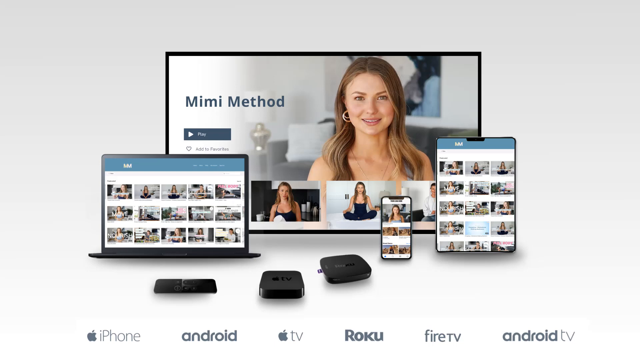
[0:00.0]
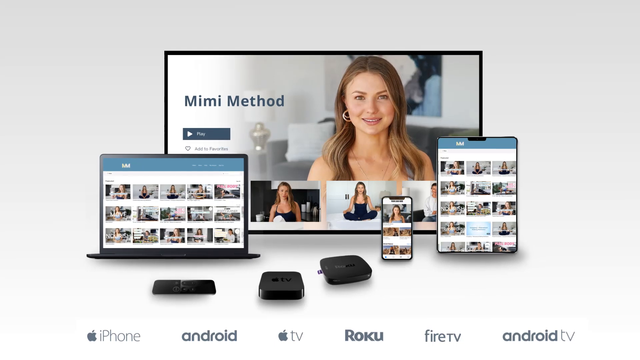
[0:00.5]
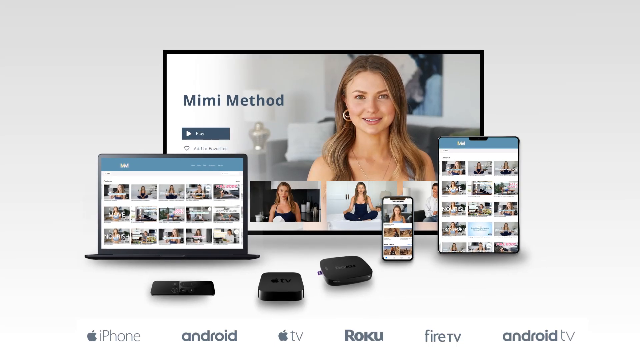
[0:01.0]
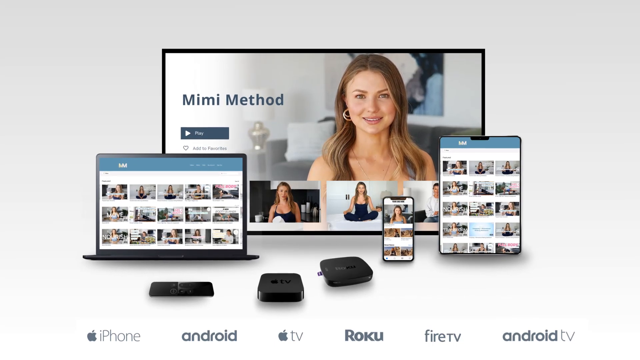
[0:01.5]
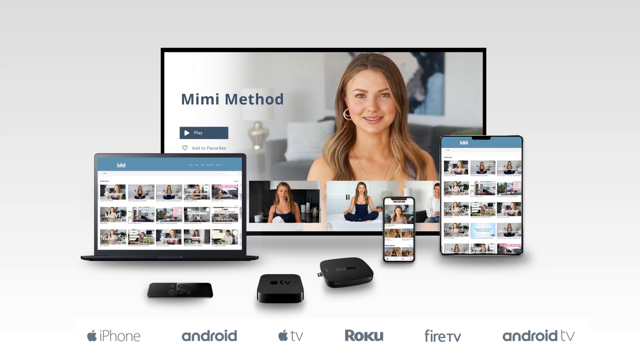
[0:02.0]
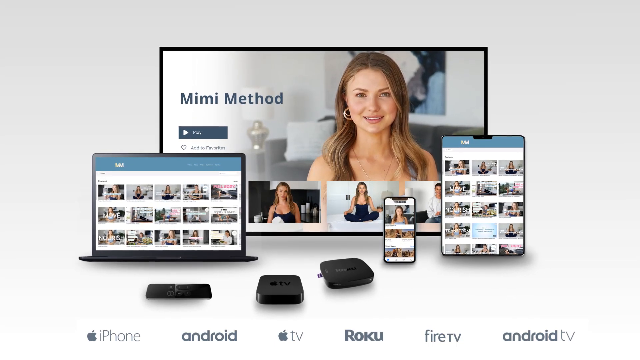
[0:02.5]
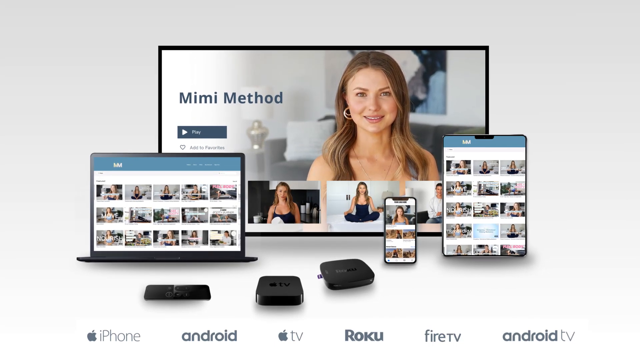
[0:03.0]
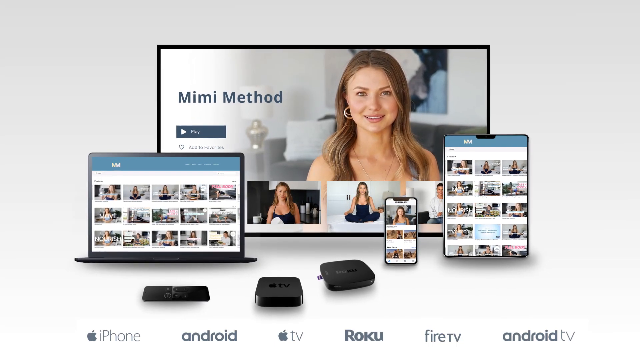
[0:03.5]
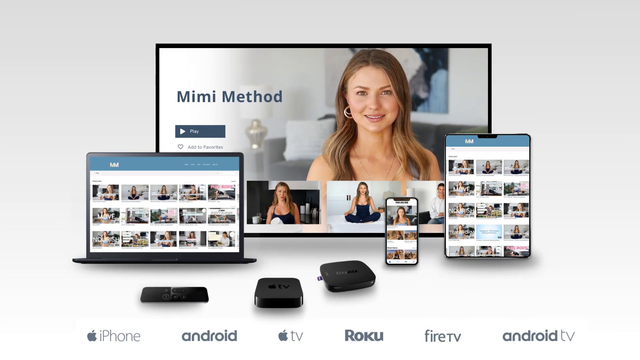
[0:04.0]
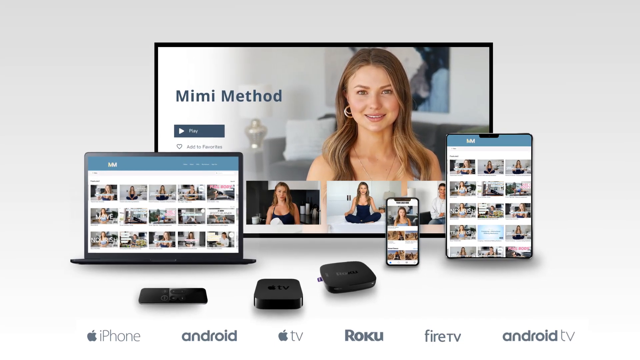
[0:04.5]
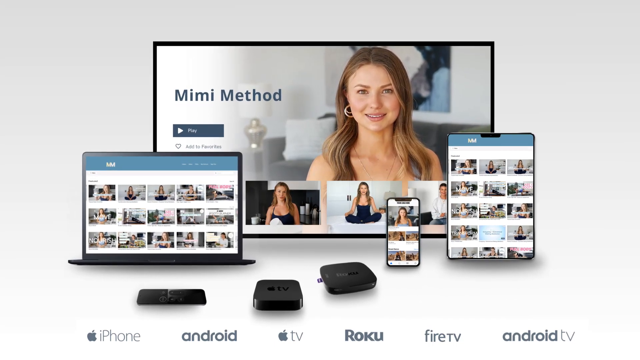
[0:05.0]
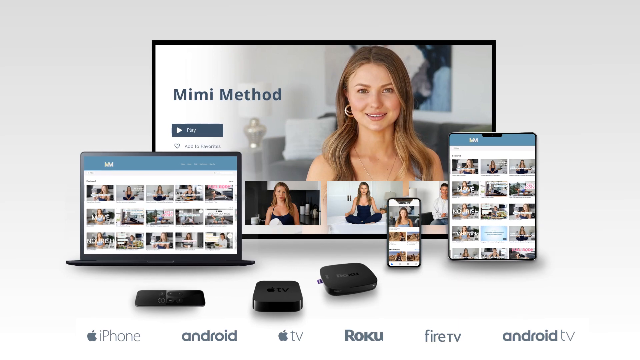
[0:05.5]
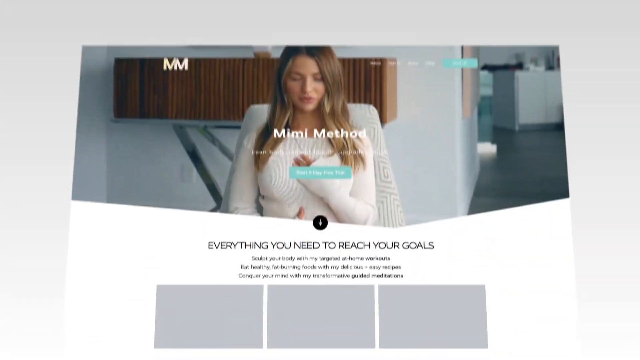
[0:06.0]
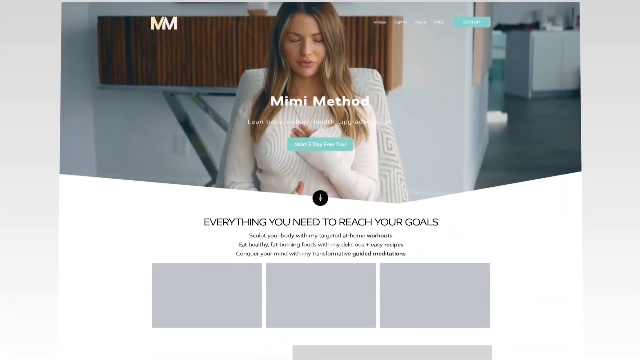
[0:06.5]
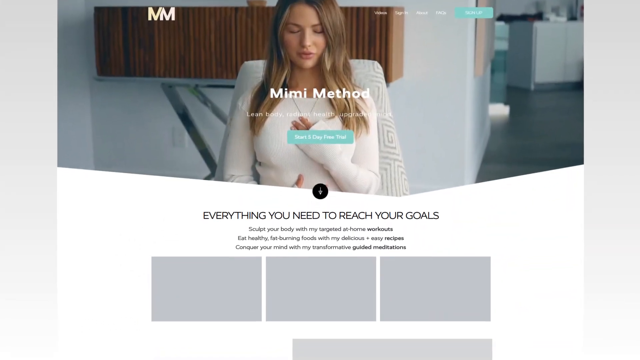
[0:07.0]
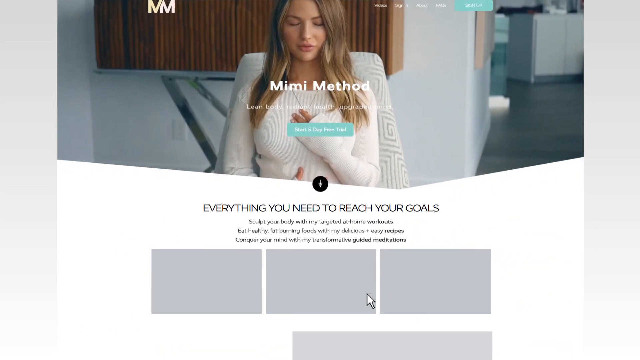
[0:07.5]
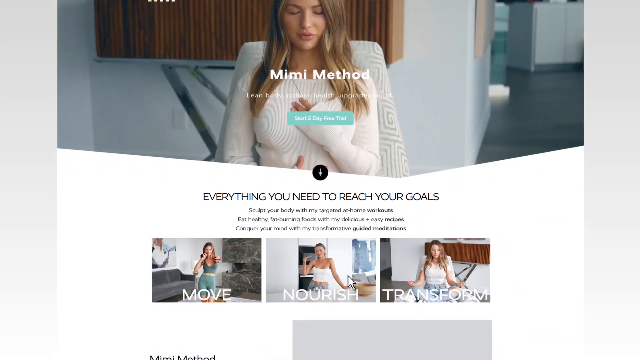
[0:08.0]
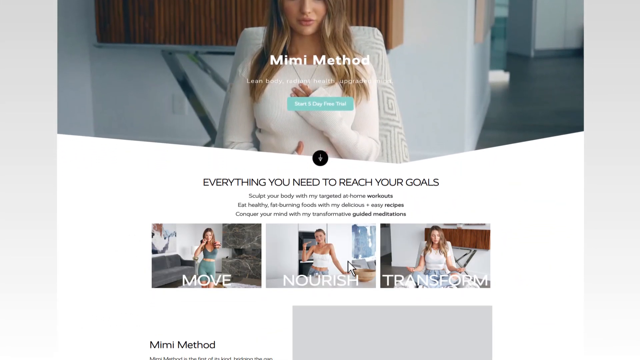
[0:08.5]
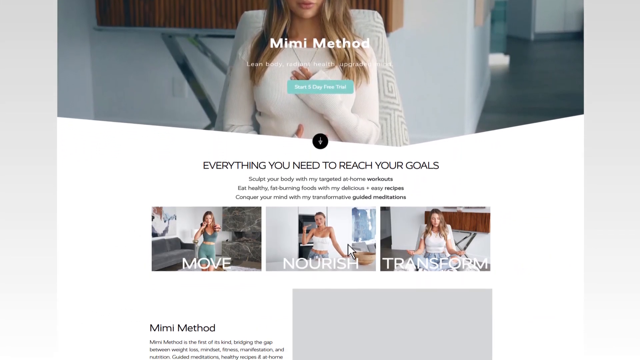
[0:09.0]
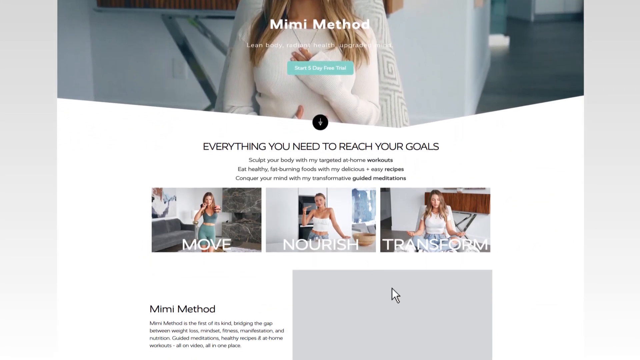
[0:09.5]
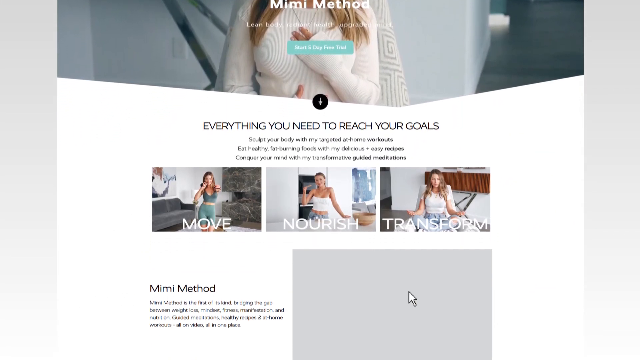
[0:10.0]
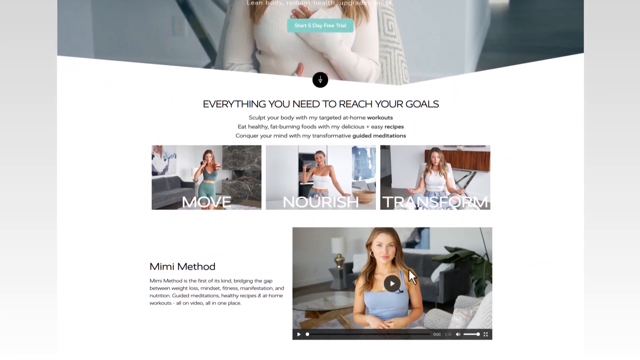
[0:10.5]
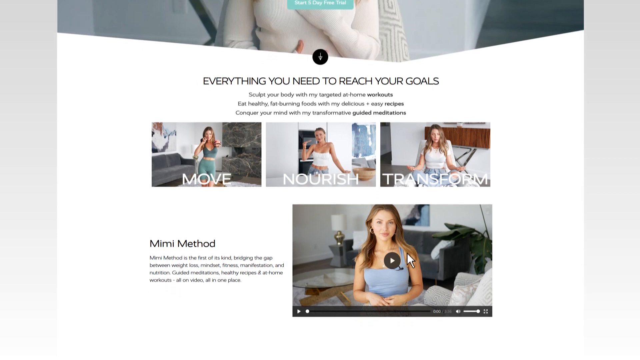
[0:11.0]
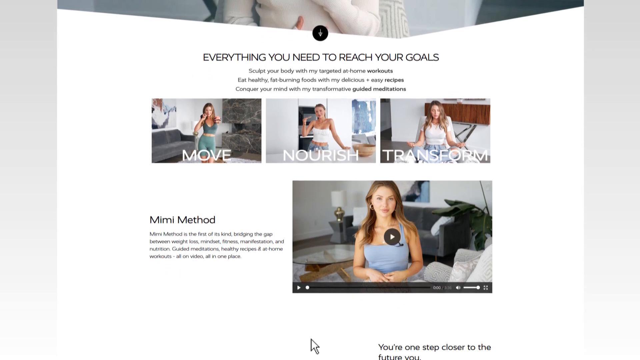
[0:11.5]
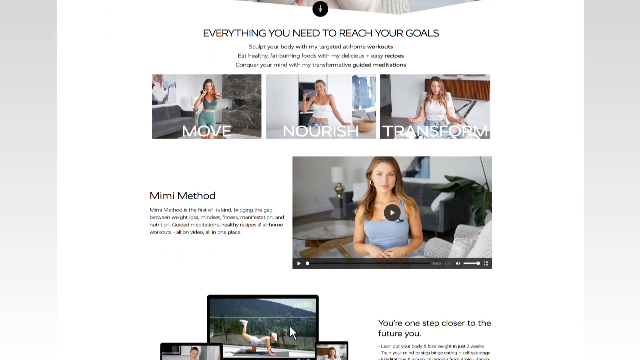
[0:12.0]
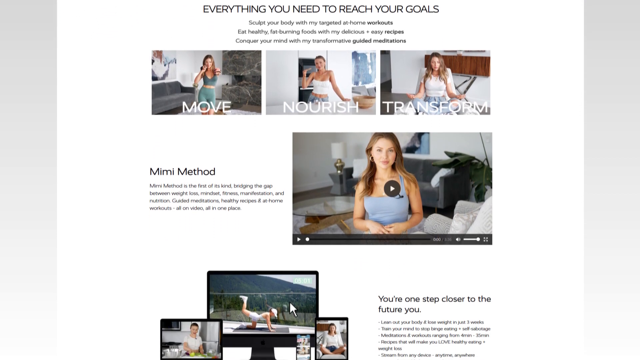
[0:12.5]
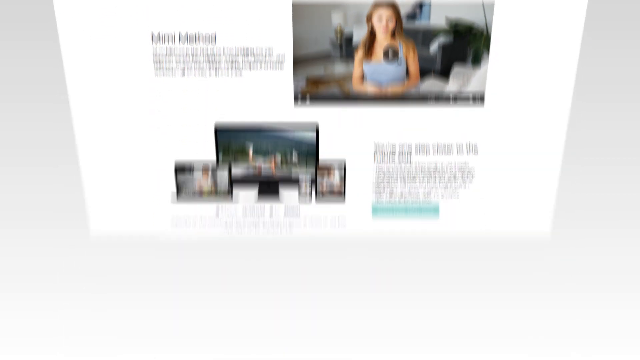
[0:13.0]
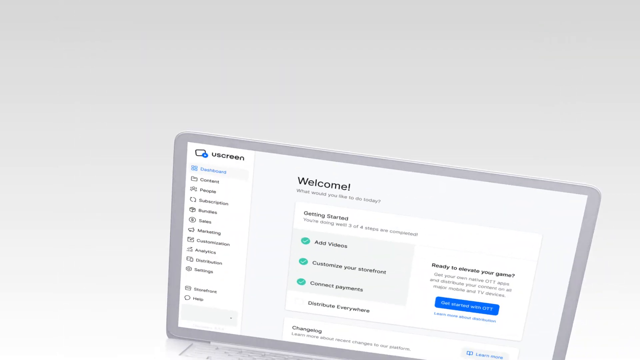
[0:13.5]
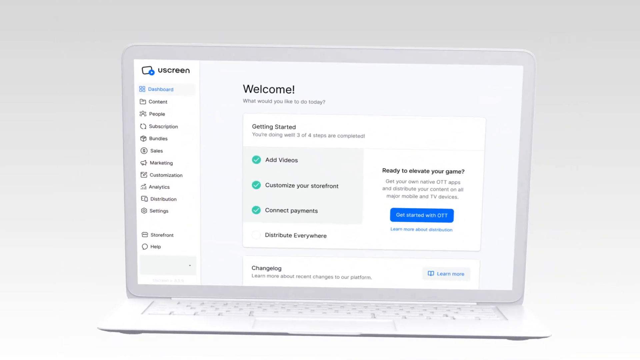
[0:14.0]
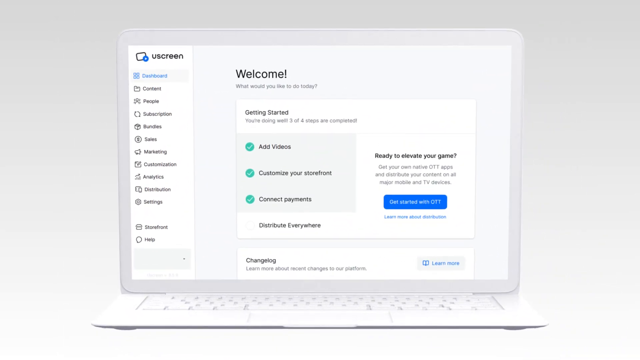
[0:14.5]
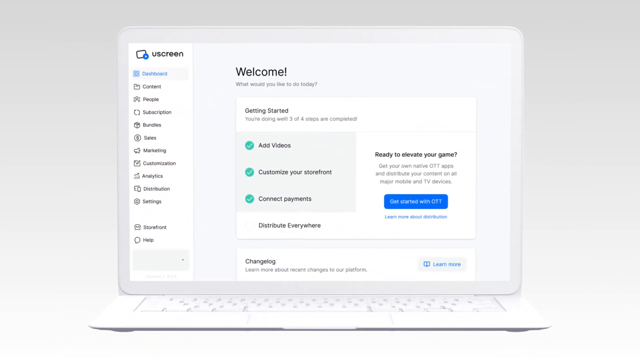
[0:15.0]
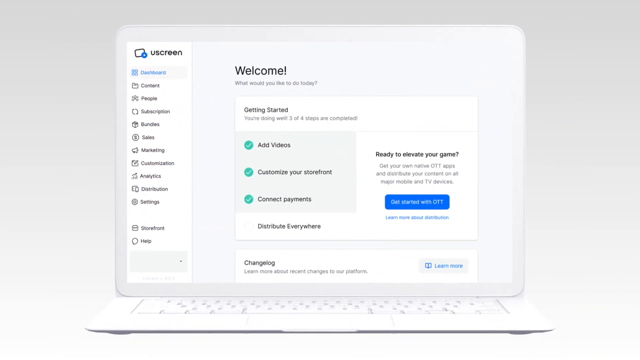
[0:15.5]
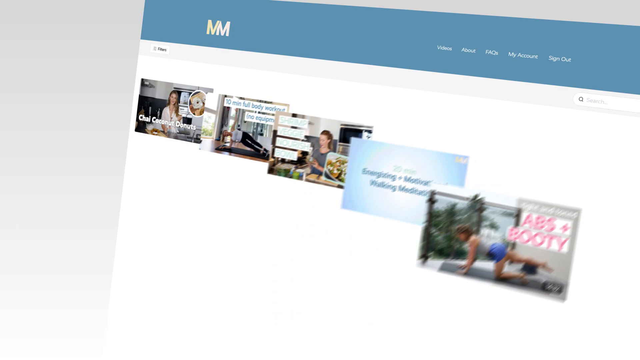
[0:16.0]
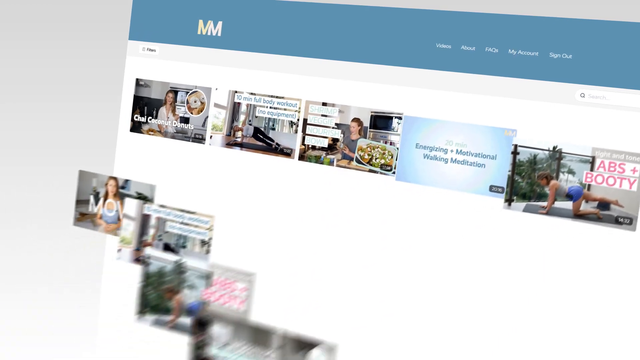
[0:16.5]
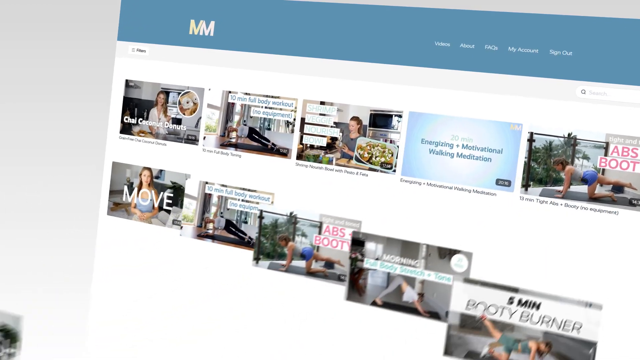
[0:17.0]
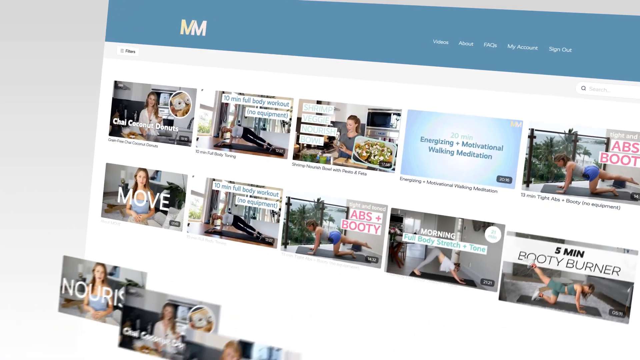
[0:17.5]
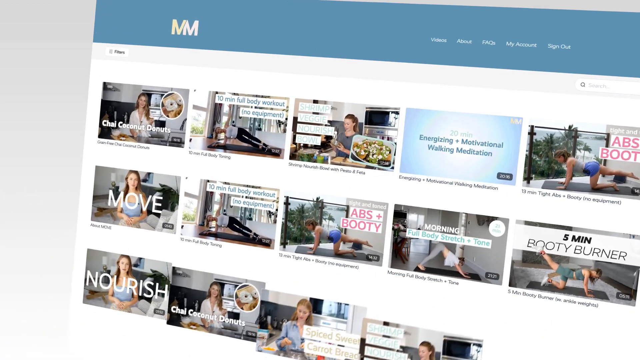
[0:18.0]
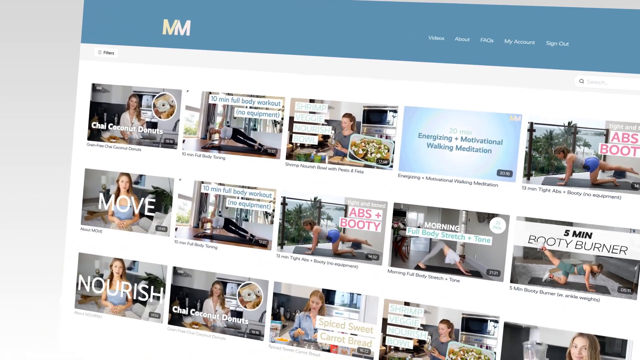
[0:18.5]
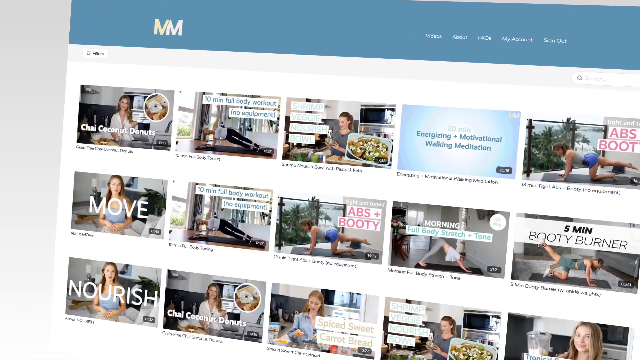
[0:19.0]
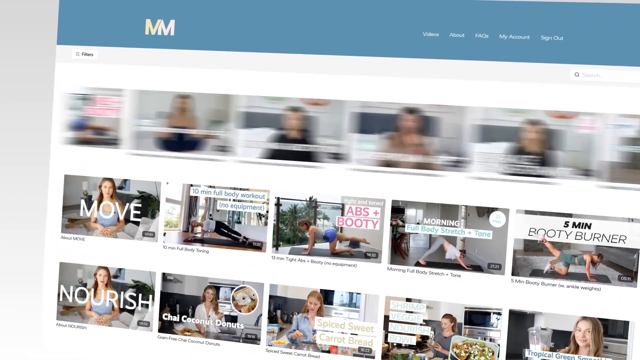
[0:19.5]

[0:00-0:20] The words "the Mimi method" appear, and the content is shown on a big screen, an iPad, a phone and a mini screen. A woman is shown with the text "Mimi method, everything you need to reach your goals." This influencer appears with an option to click and watch her video, and the word "welcome" is displayed. Her webpage shows many of her clips and lists the devices it can be watched on: iPhone, Android, Apple TV, Roku, fire TV and Android TV. She appears to be a wellness coach. She is pictured in various pictures, such as yoga poses and other activities for reaching goals. There is a write-up about her own method, showing that she works on various parts of the body, mostly through exercise.